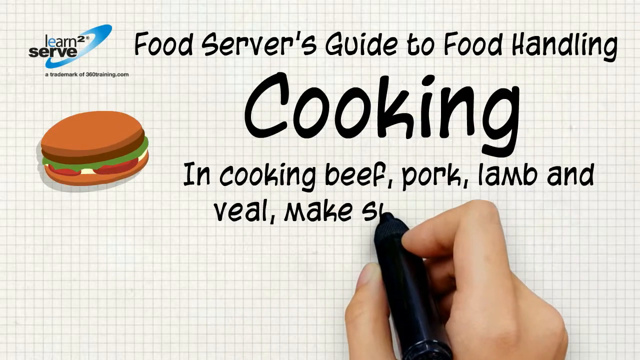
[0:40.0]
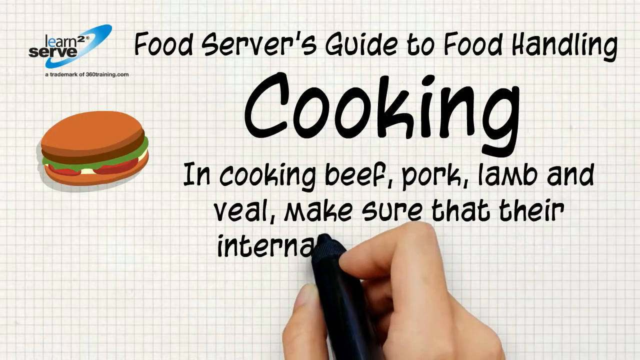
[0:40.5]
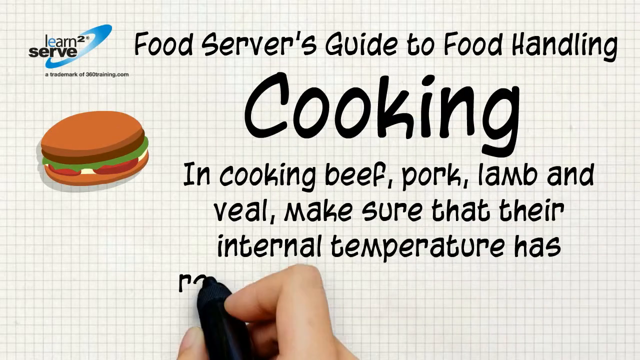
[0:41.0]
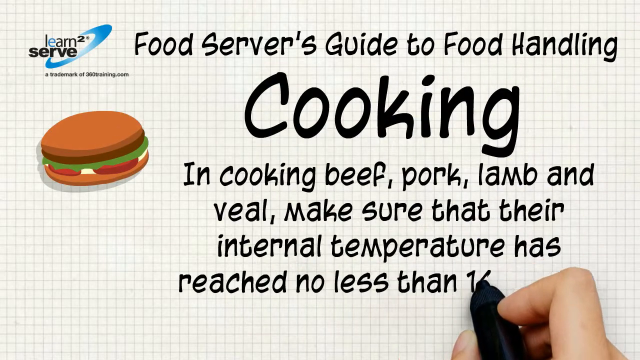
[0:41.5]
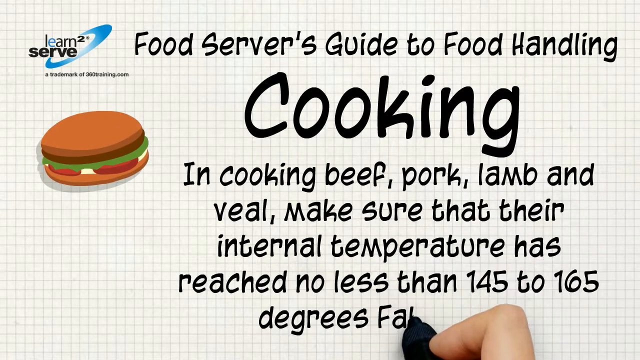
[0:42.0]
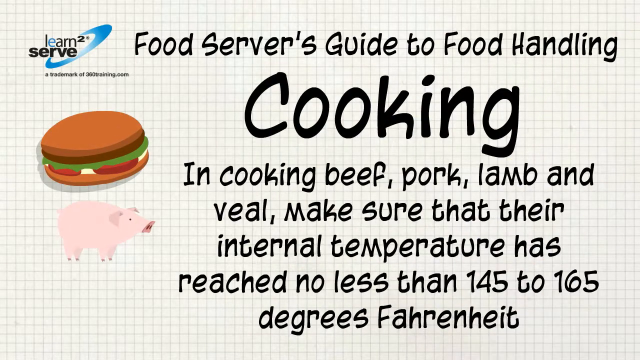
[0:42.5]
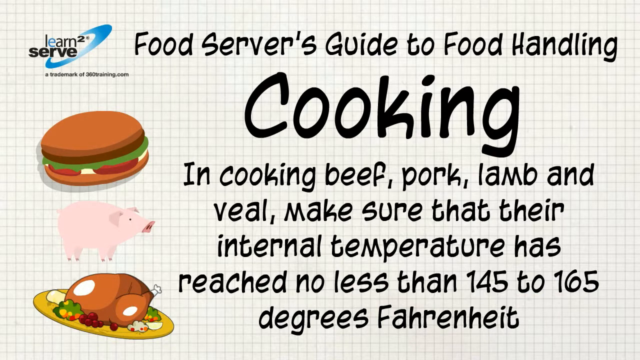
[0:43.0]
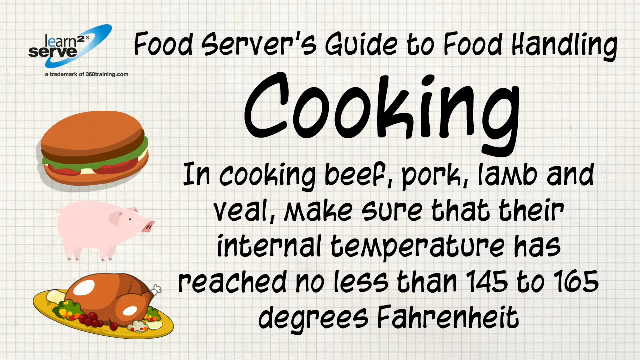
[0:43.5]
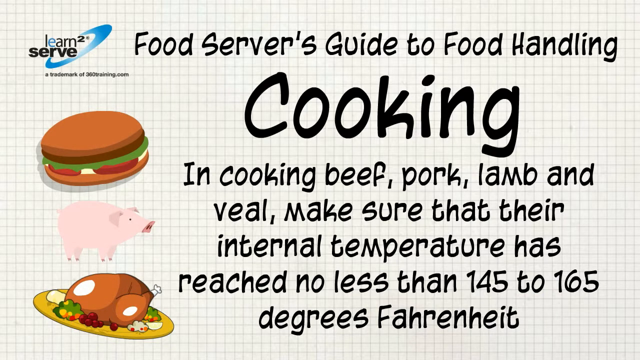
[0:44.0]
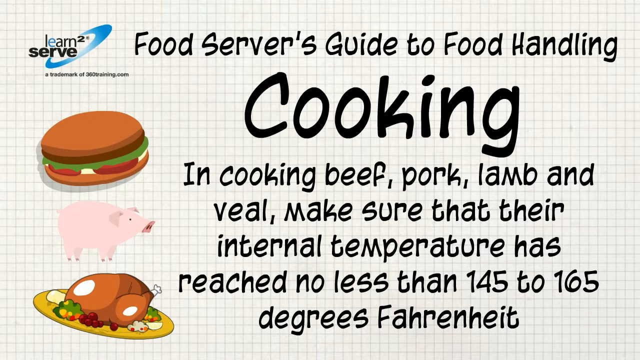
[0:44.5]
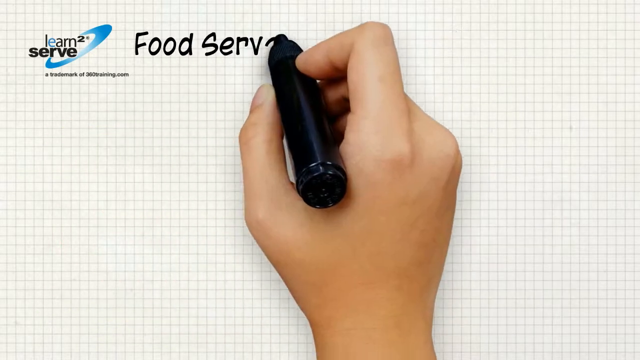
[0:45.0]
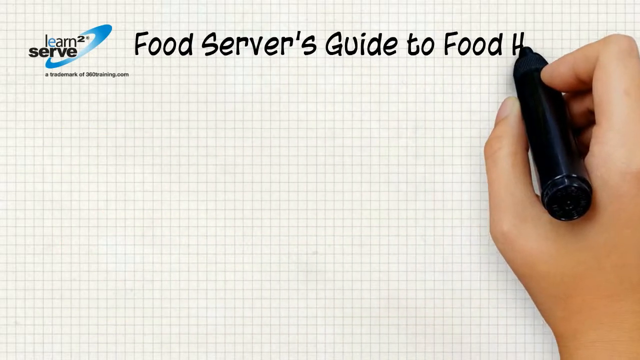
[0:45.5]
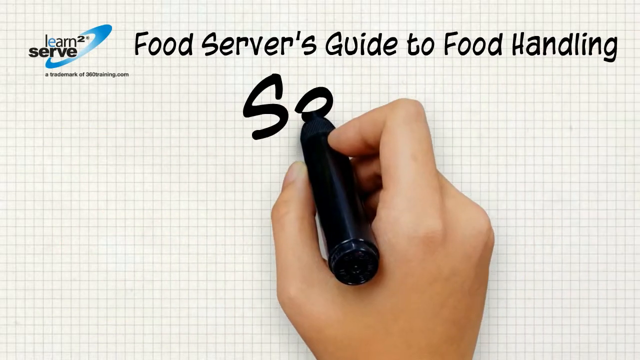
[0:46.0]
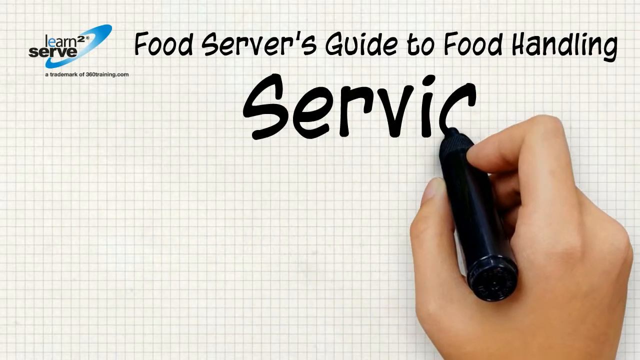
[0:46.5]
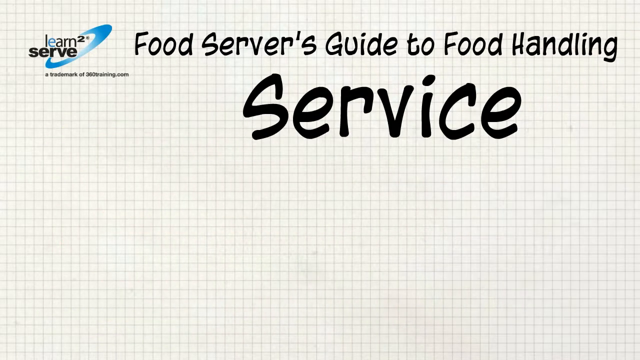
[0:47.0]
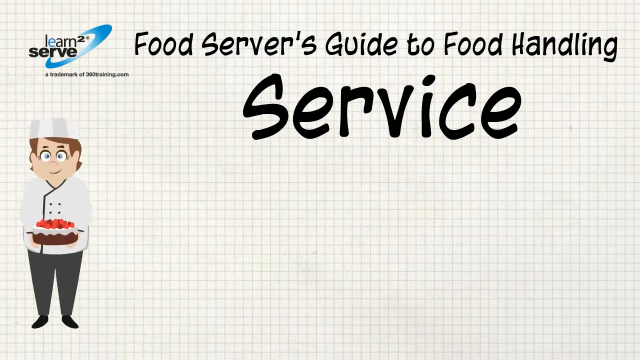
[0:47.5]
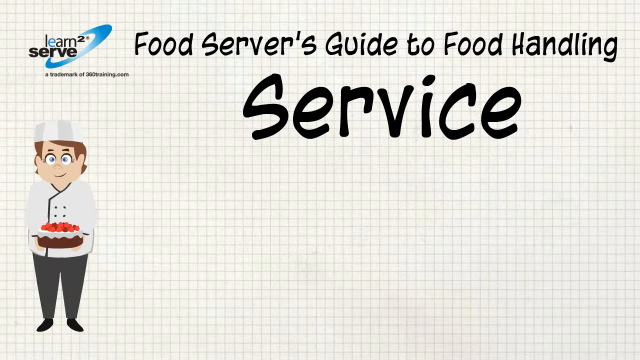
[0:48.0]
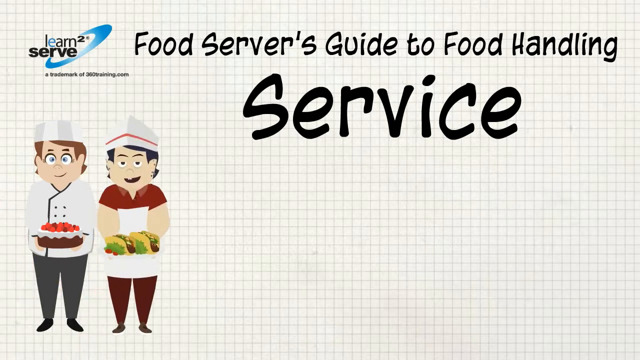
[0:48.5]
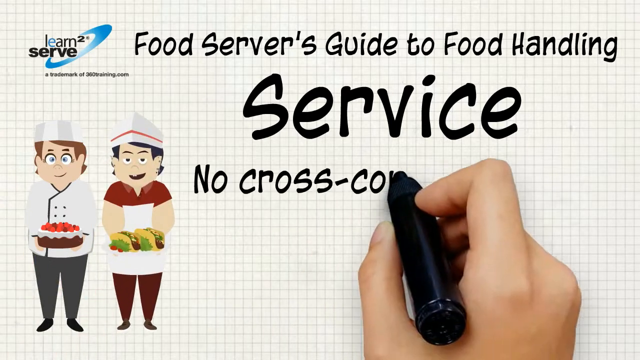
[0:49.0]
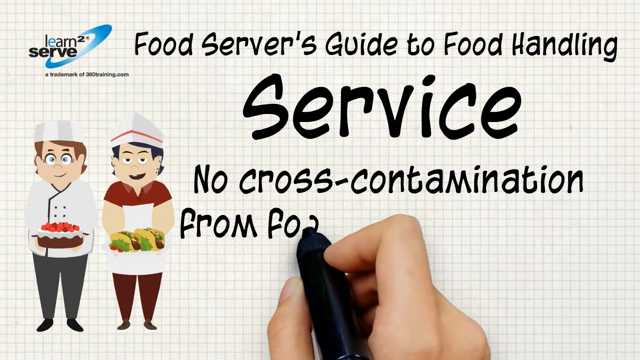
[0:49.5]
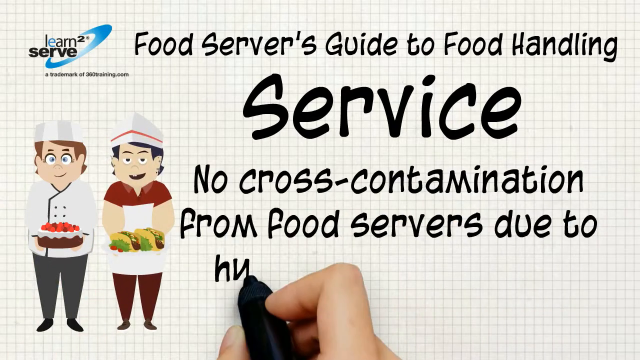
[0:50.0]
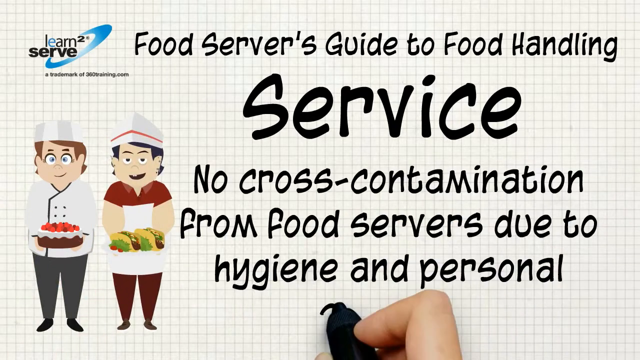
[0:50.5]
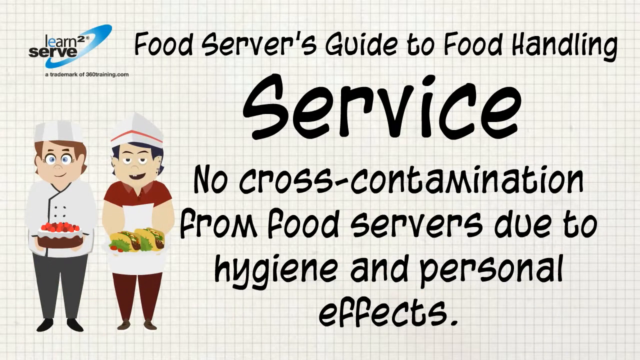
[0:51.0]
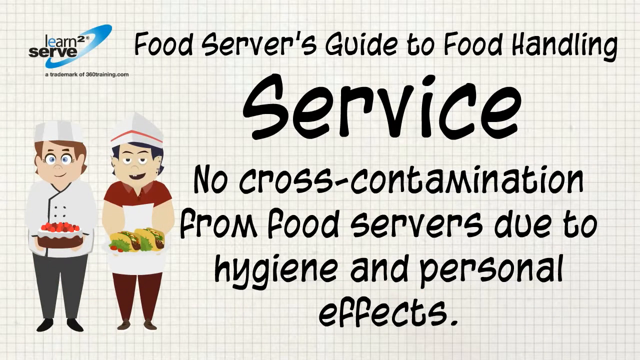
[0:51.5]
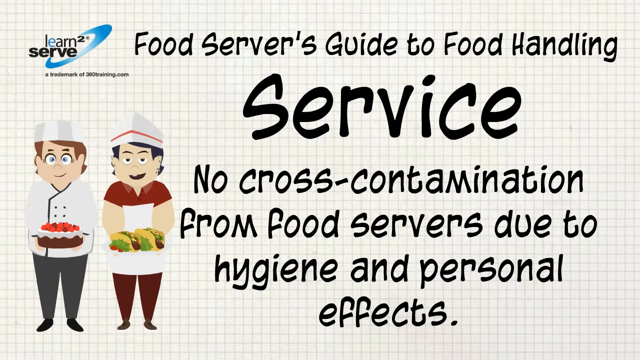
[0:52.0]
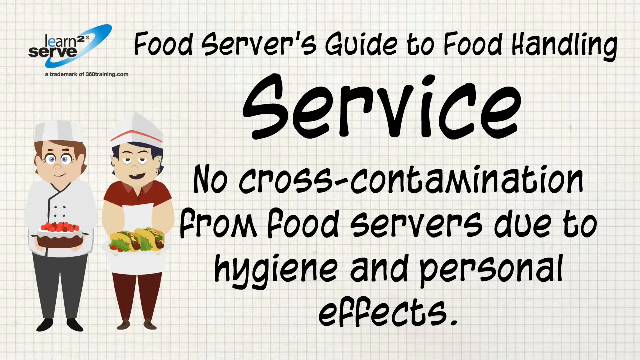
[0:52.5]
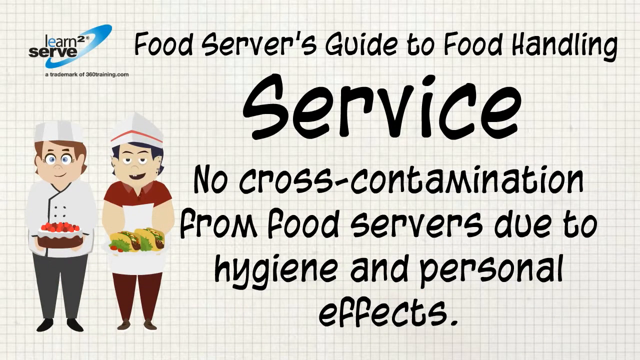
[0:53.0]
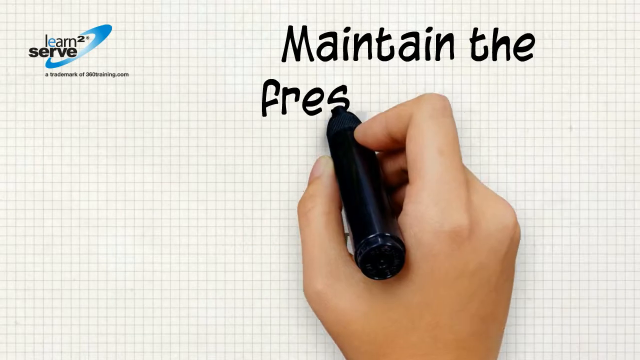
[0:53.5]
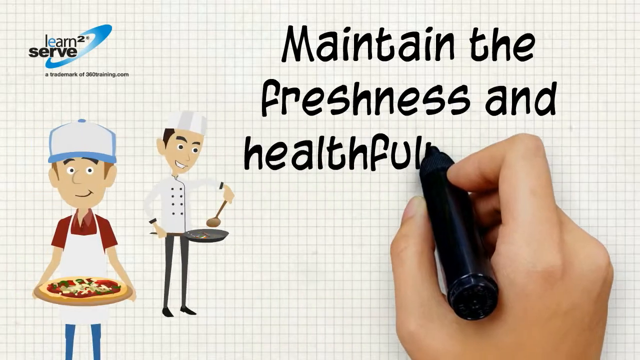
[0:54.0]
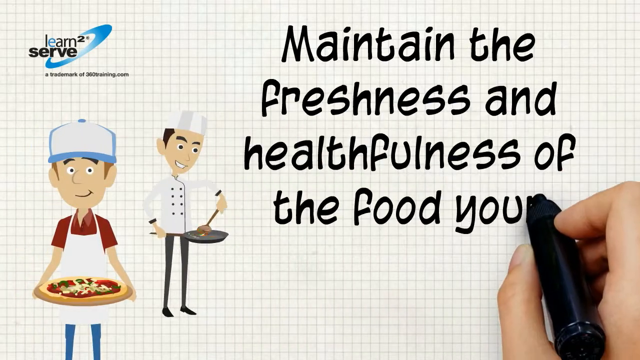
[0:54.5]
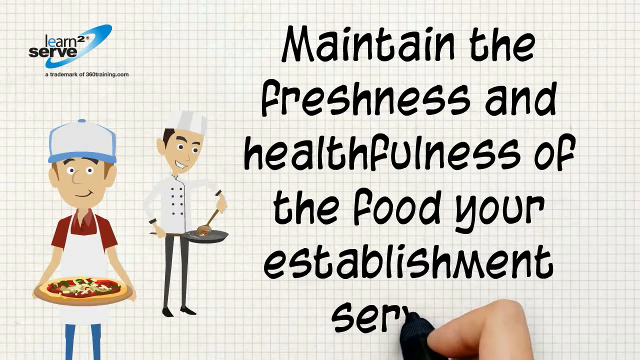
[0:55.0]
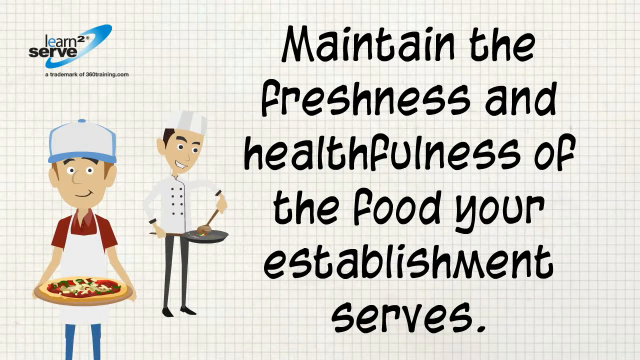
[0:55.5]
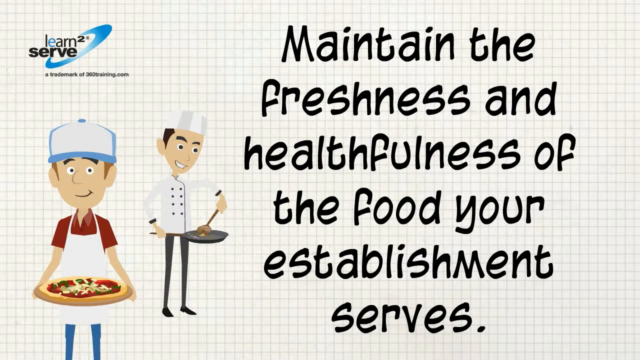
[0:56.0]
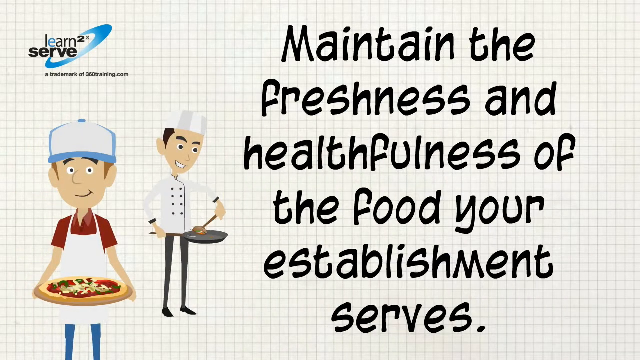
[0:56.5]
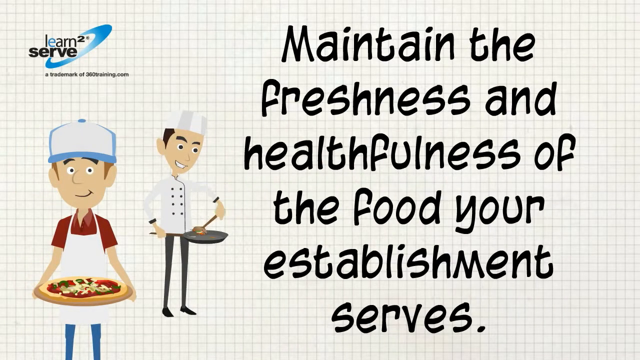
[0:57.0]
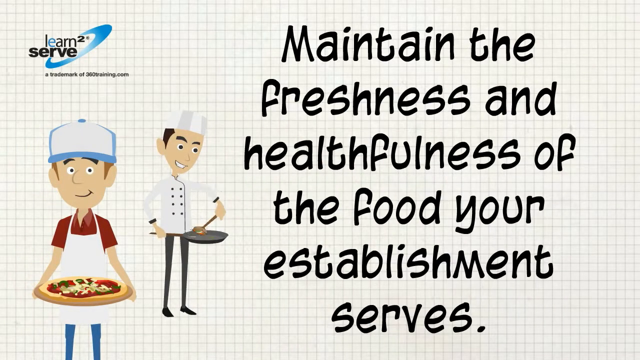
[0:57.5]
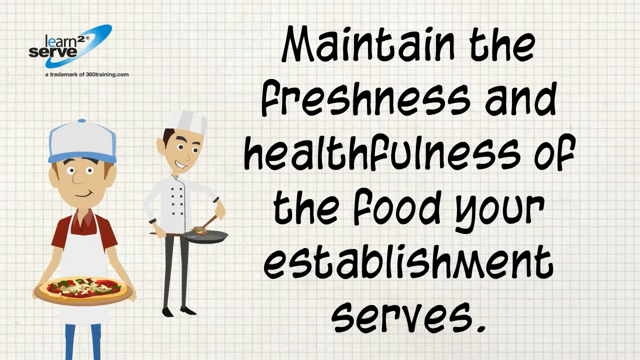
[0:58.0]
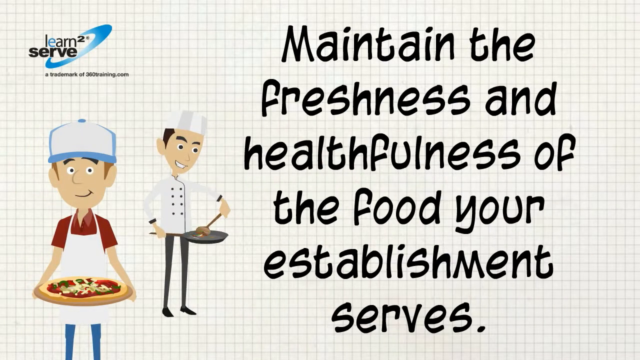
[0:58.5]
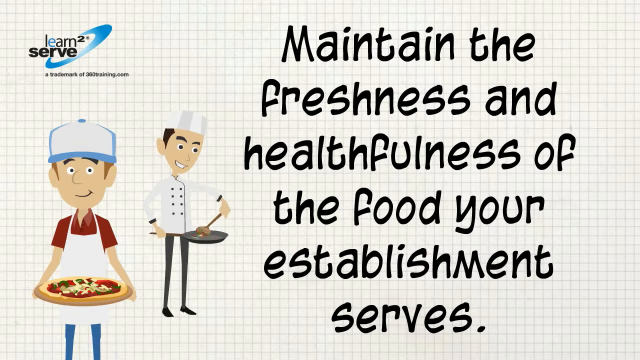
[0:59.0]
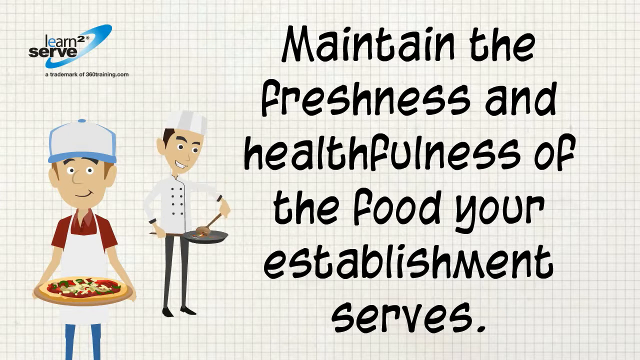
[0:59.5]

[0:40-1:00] The server's guide to food handling is in its cooking section, where an example of a type of food is given. It then moves to service, showing an image of some chefs along with guidance on how chefs can avoid contamination and maintain hygiene. Next comes maintaining the freshness and healthfulness of the food the establishment serves, with a video showing people and how chefs should serve food hygienically.